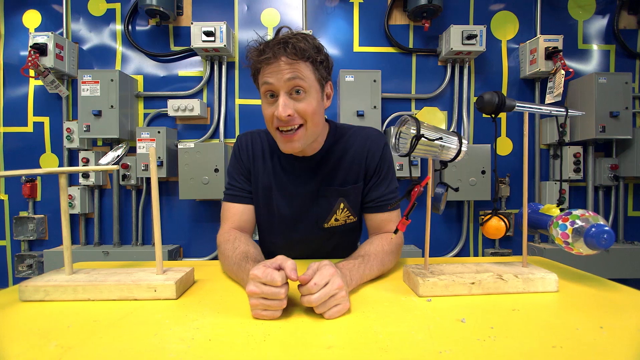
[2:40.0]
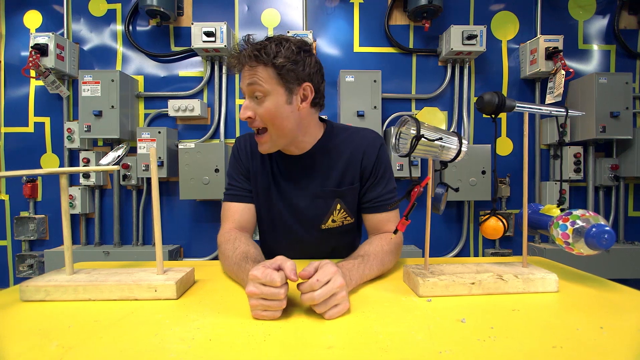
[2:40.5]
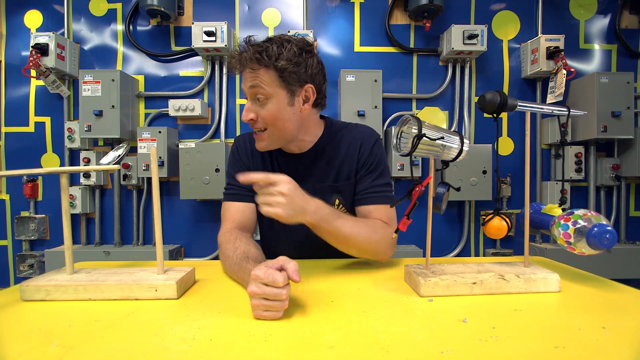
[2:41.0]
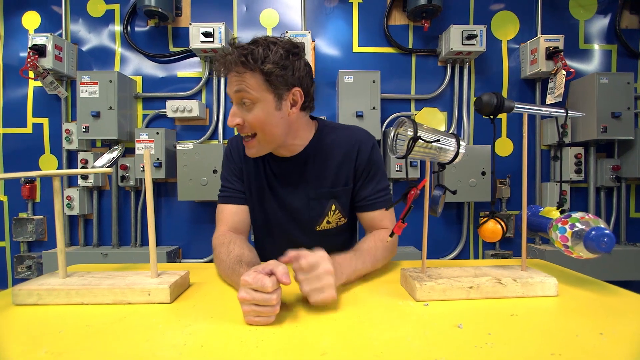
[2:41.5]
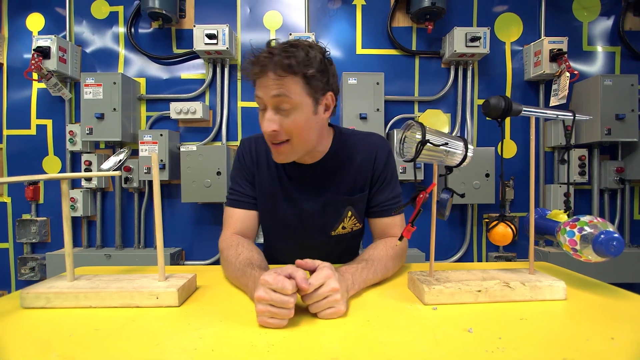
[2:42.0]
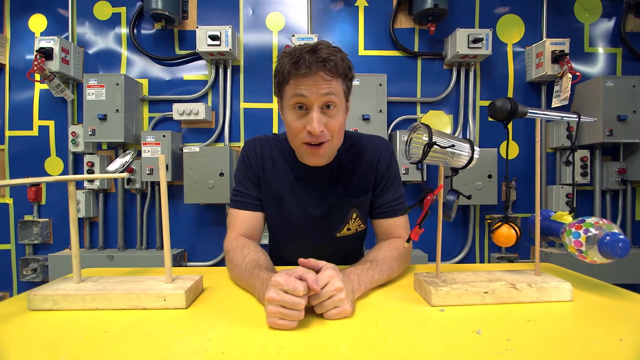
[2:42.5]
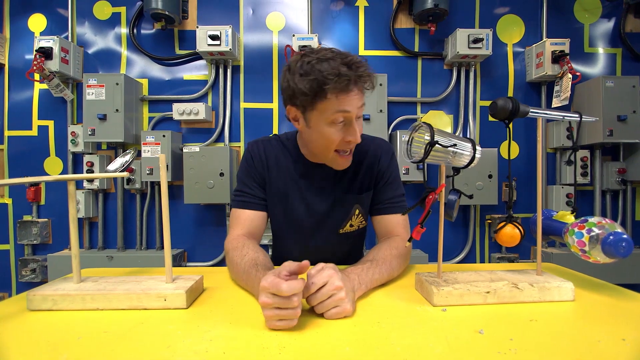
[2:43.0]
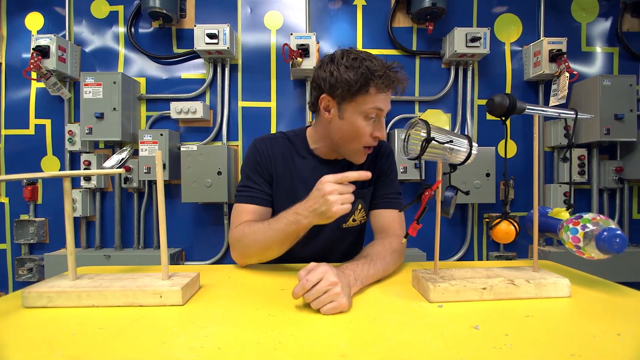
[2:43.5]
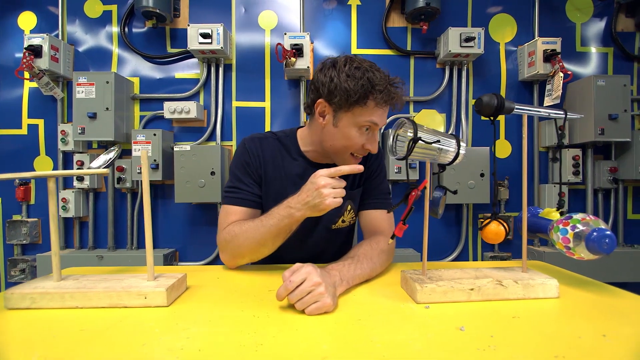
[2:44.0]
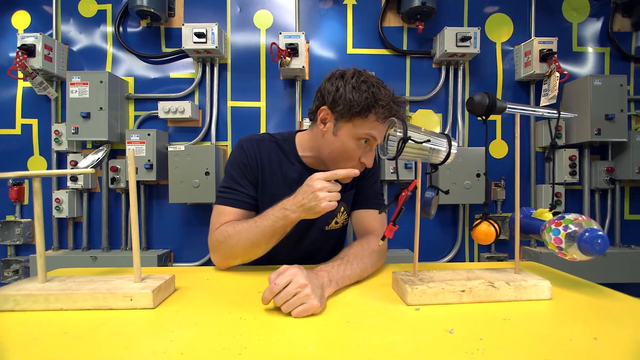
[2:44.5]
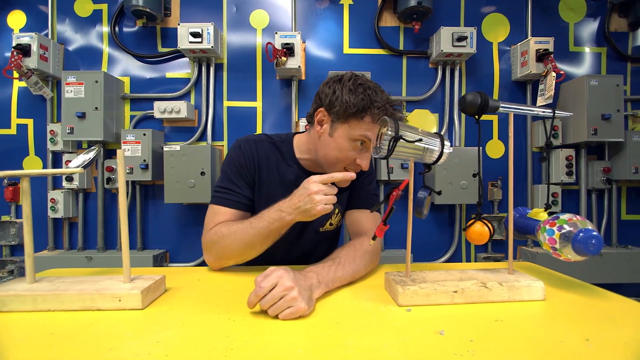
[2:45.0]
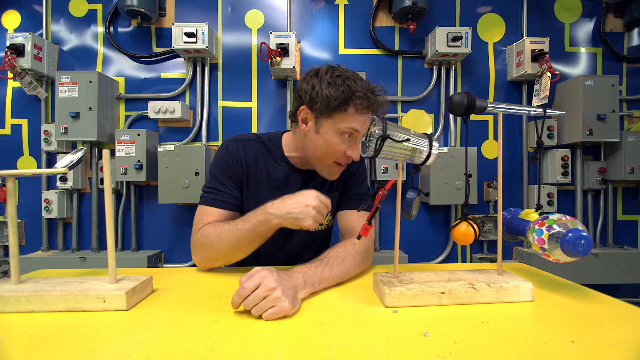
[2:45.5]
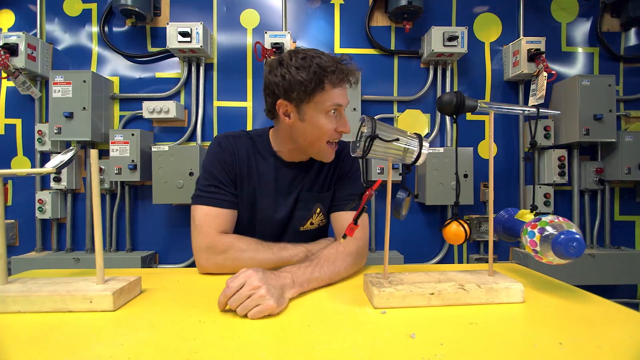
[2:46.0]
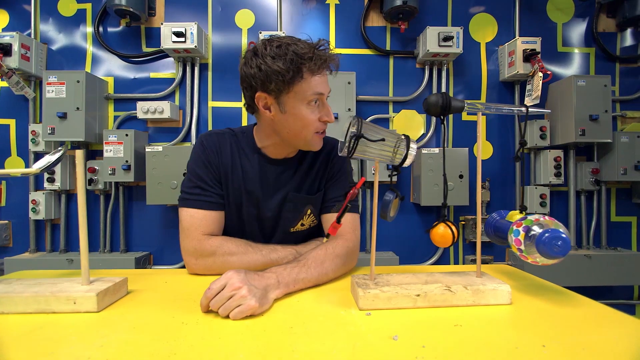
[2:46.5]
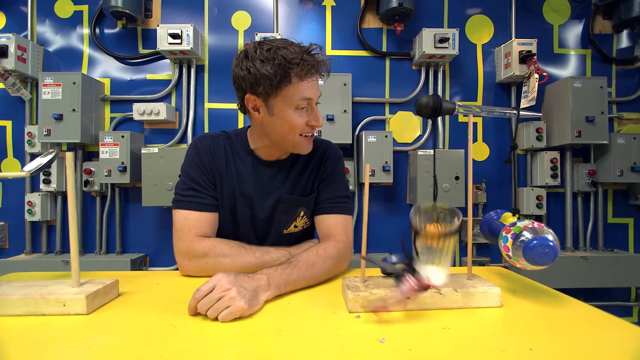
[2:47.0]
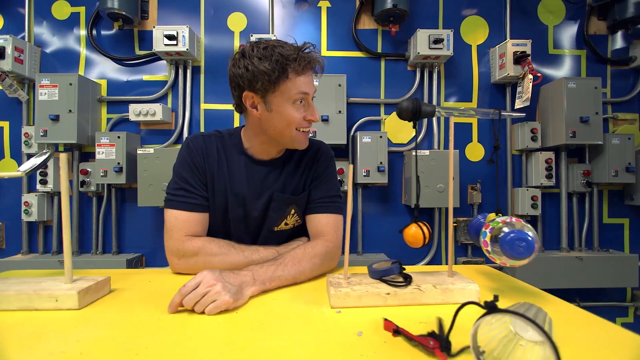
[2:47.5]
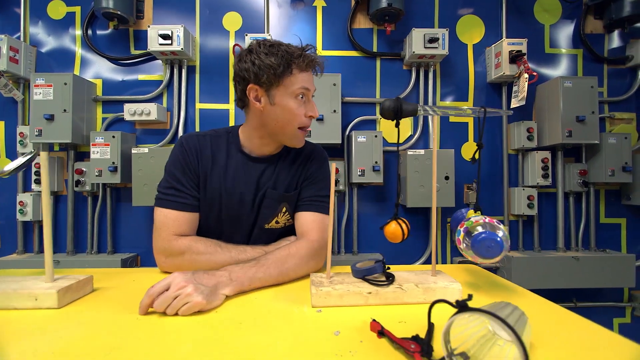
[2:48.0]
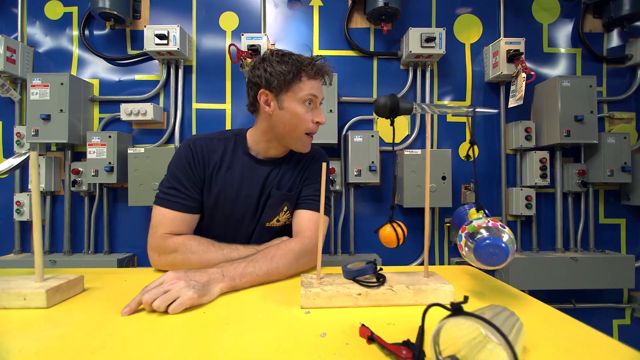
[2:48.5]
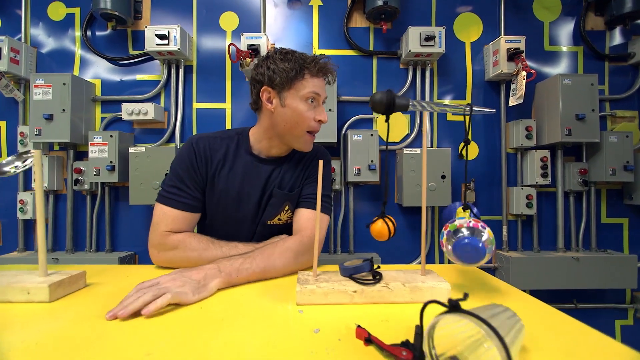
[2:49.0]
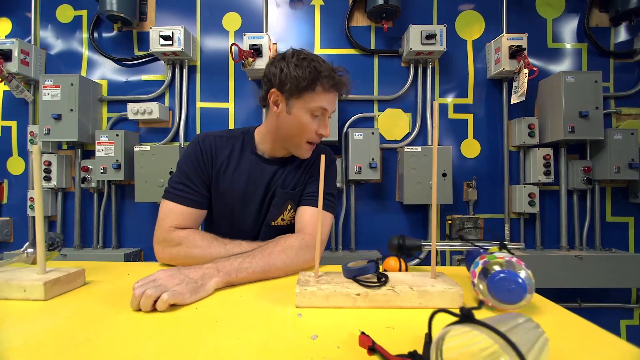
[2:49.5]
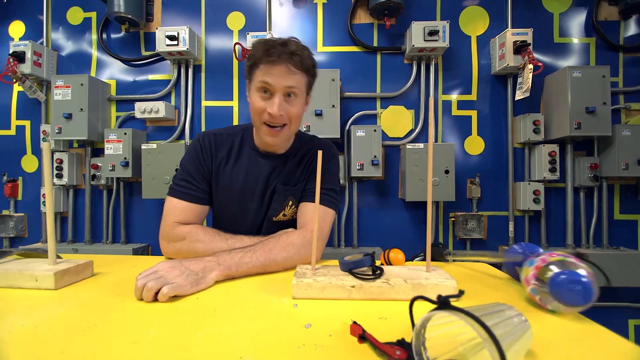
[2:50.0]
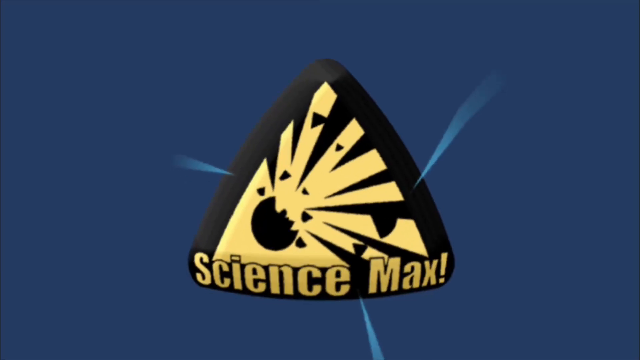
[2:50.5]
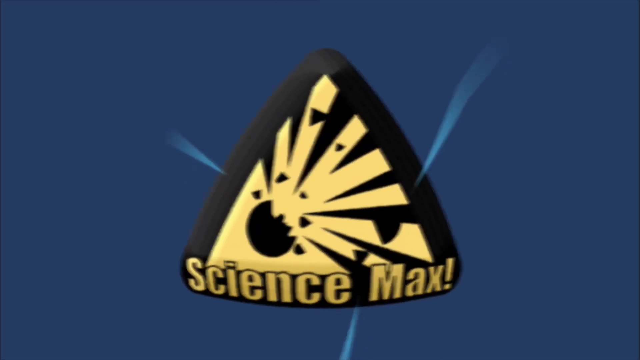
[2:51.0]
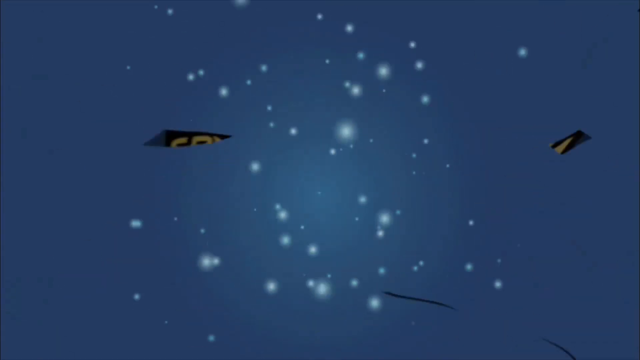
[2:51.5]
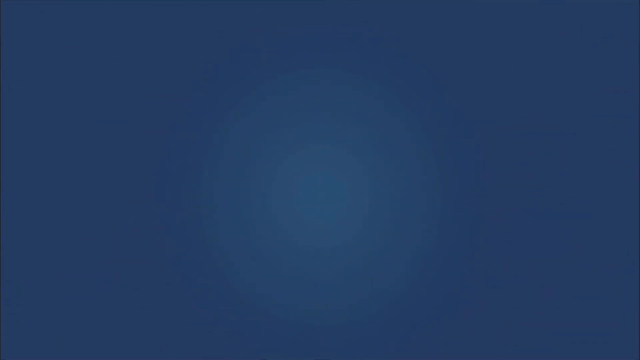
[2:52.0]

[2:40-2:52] A man with brown hair and a dark blue shirt sits at a yellow table, with two wooden boards, each with two wooden pillars, to his left and right. He smiles at the viewer. He turns to his right and points with his left hand at the wooden pillar on the left side of the frame, looks forward at the camera, then turns to his left and points his right hand at the board and its two wooden pillars on the right side of the frame. His gaze stays to his lower right as he continues to speak. He looks surprised as the flashlight falls from its wooden pillar. He then begins to shake the table with his left hand, and all of the objects fall at once. The video switches to the Science Max logo against a blue background, which explodes into little pieces as little spots of light appear in the background.